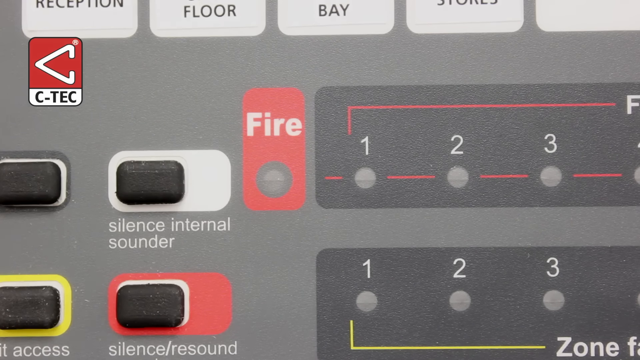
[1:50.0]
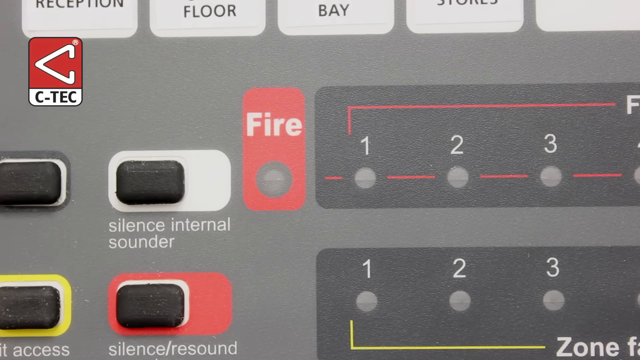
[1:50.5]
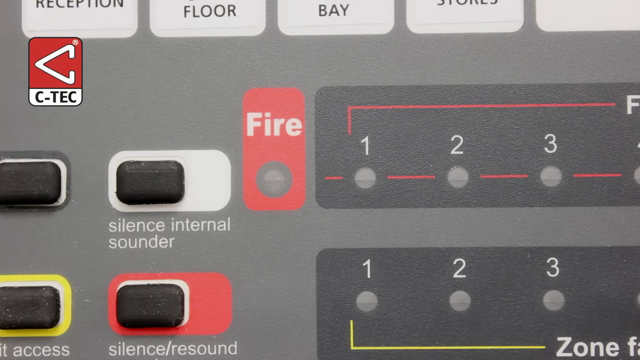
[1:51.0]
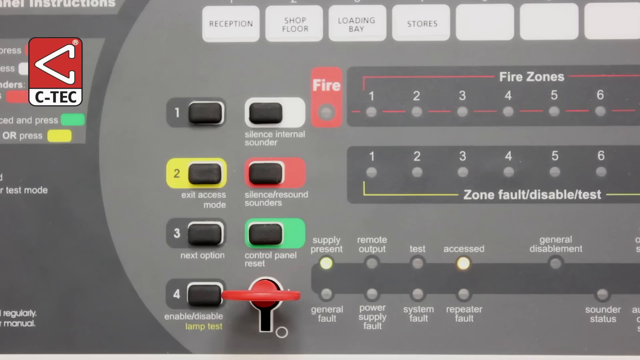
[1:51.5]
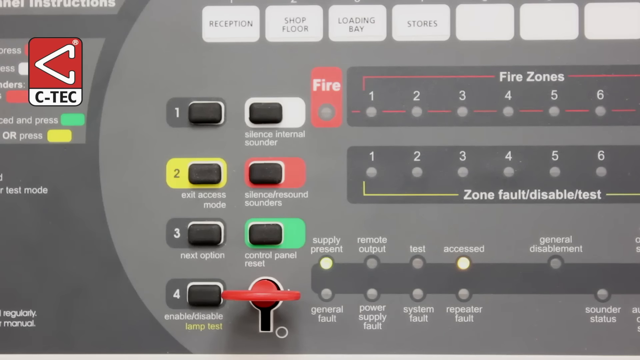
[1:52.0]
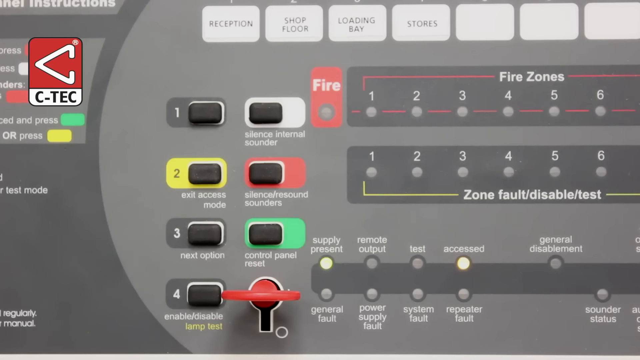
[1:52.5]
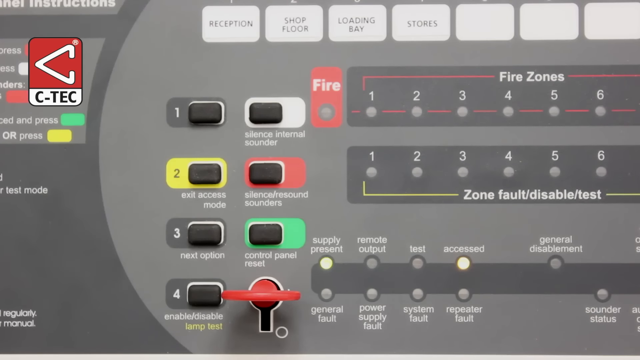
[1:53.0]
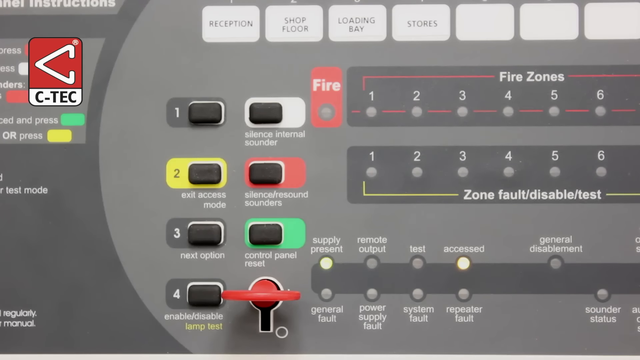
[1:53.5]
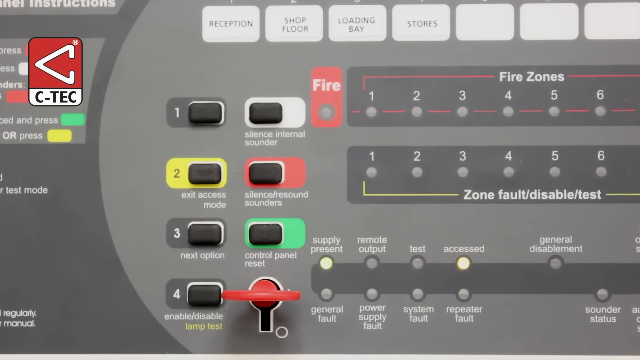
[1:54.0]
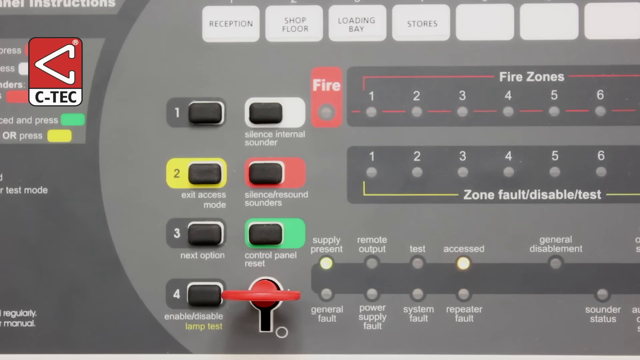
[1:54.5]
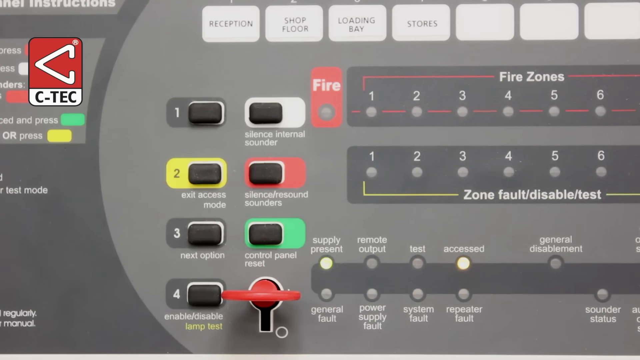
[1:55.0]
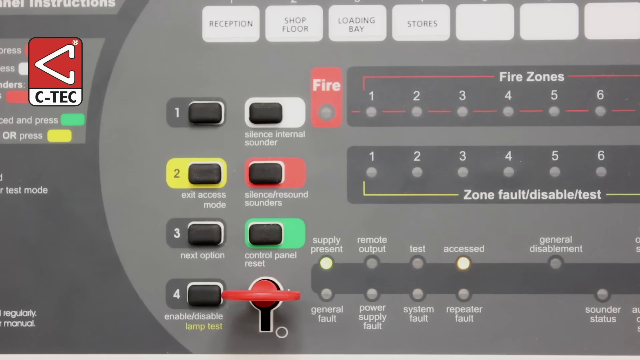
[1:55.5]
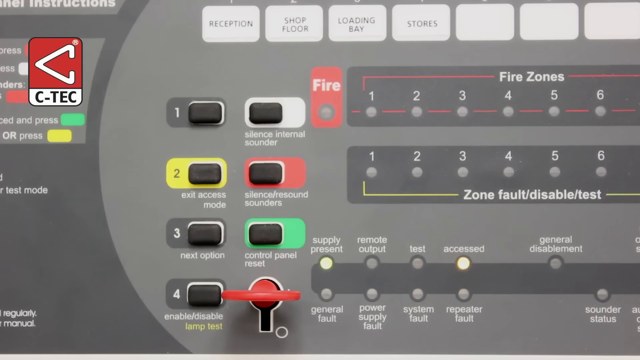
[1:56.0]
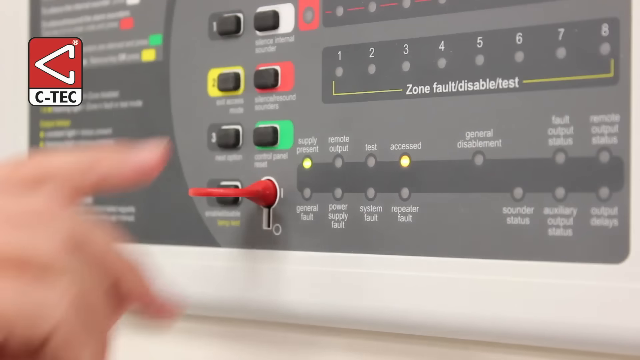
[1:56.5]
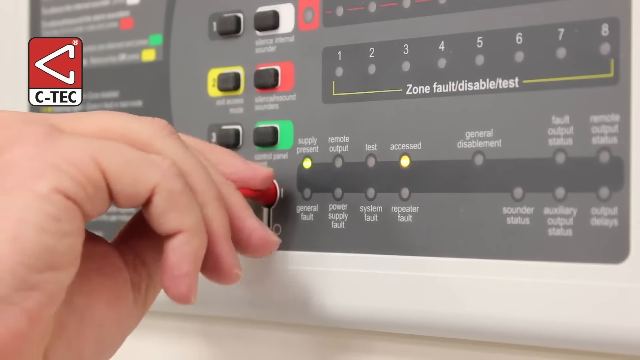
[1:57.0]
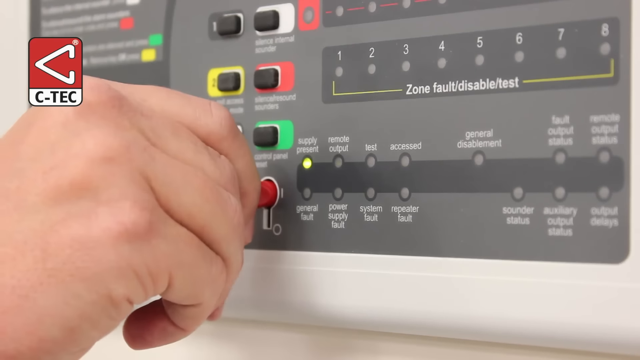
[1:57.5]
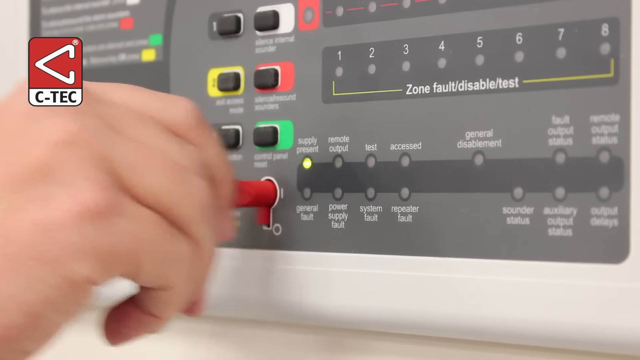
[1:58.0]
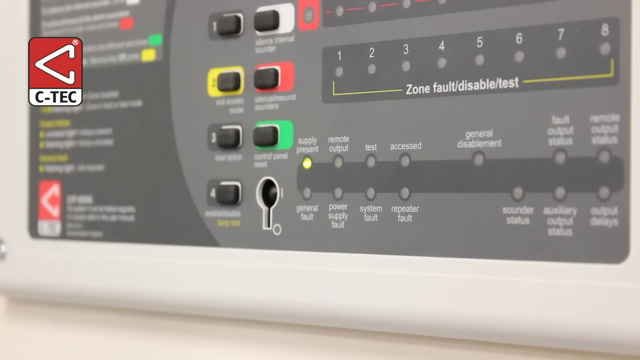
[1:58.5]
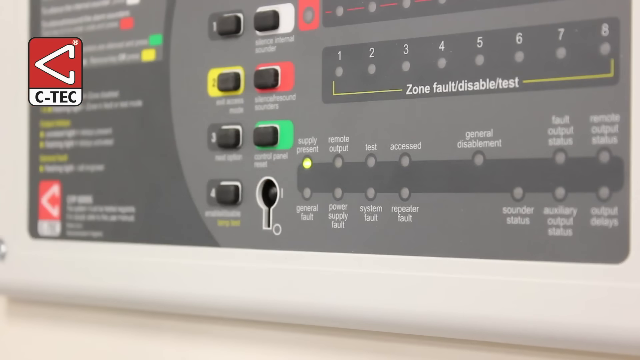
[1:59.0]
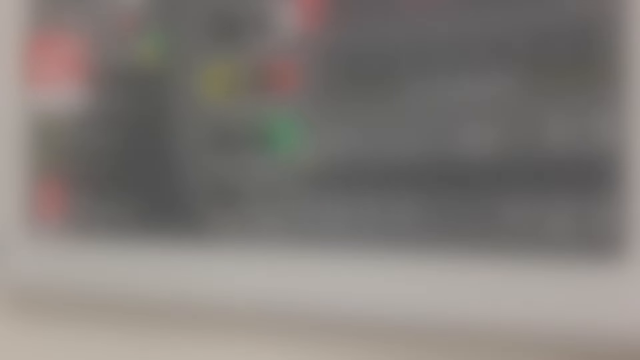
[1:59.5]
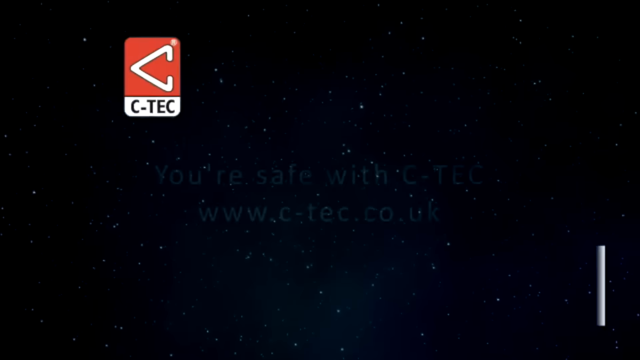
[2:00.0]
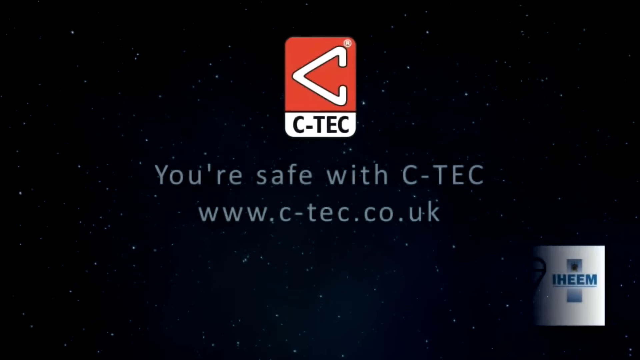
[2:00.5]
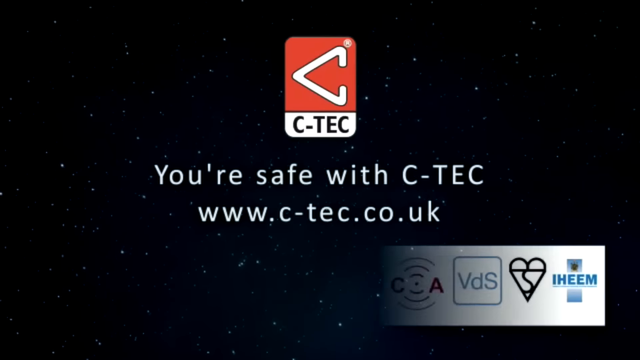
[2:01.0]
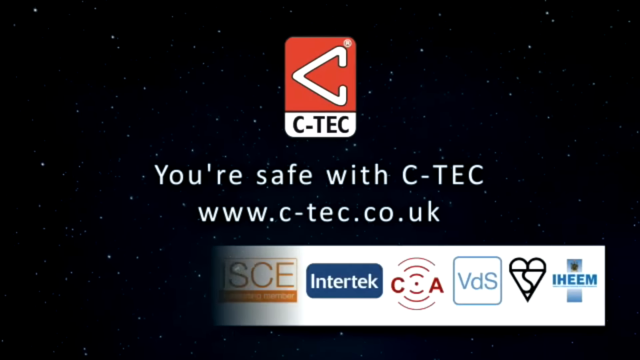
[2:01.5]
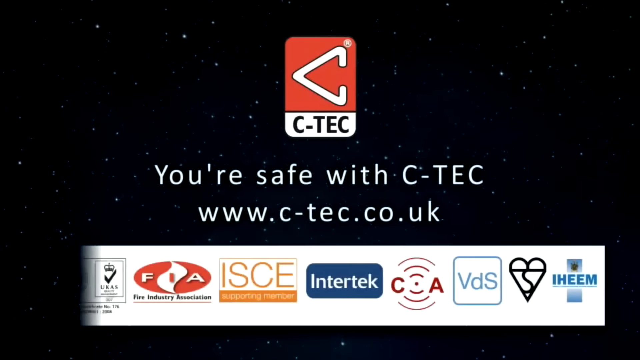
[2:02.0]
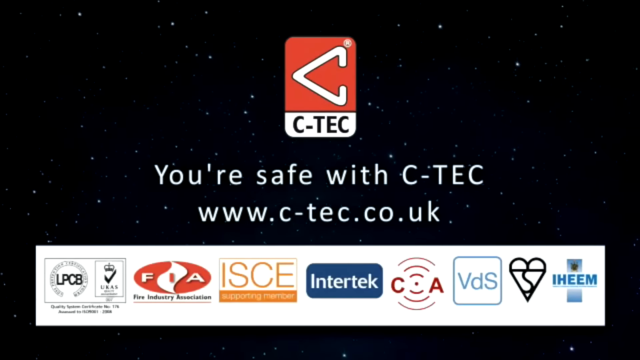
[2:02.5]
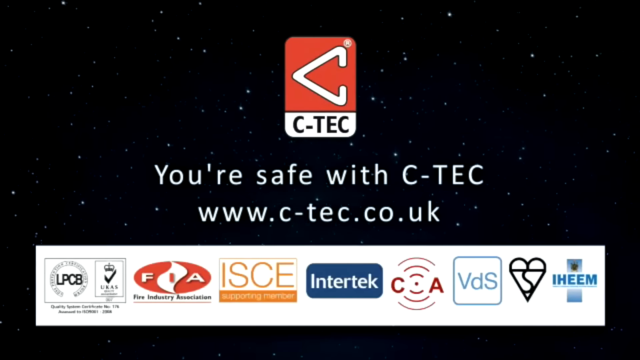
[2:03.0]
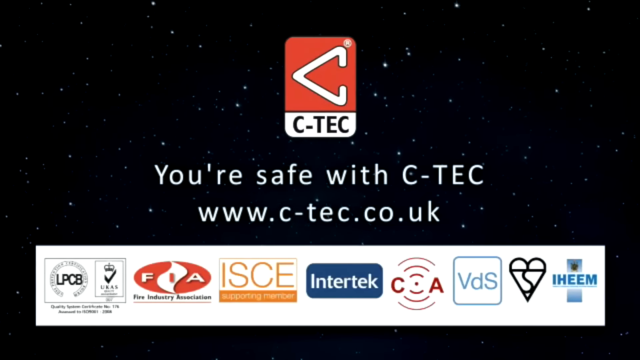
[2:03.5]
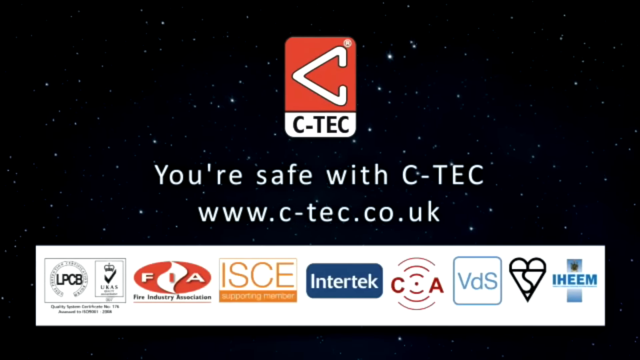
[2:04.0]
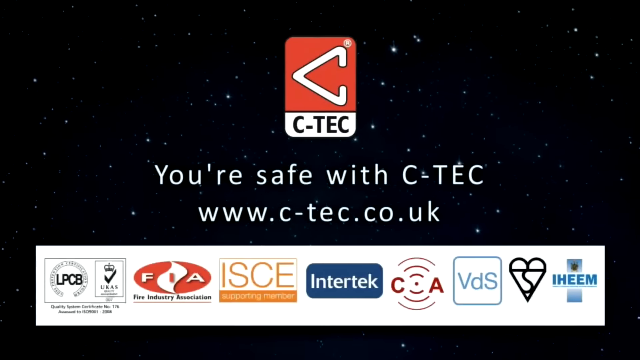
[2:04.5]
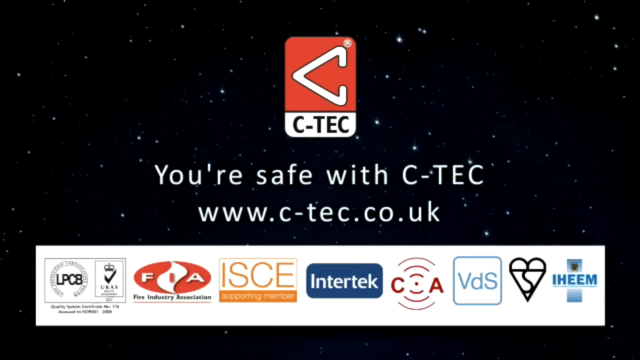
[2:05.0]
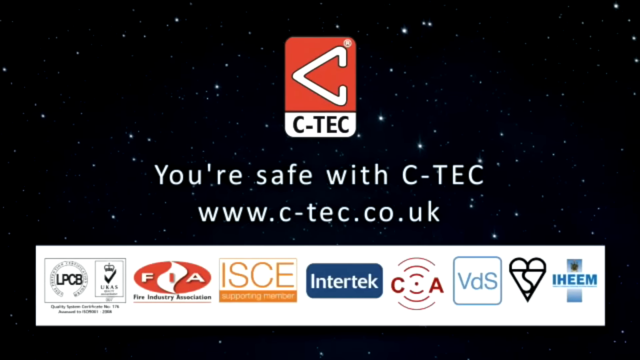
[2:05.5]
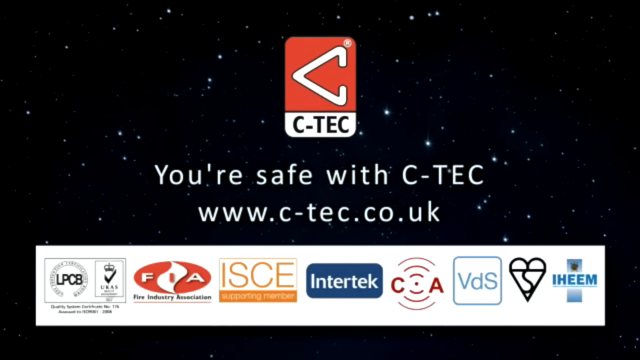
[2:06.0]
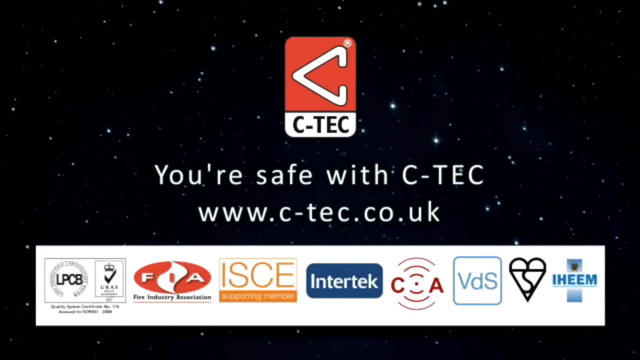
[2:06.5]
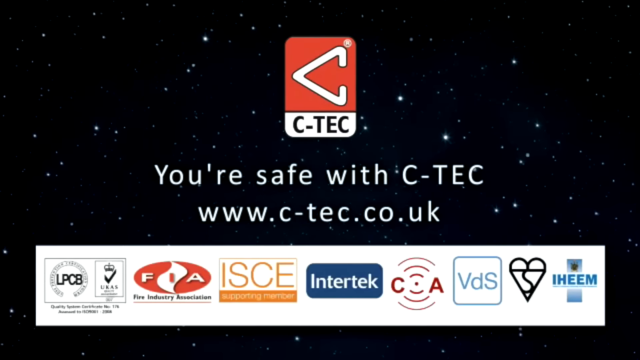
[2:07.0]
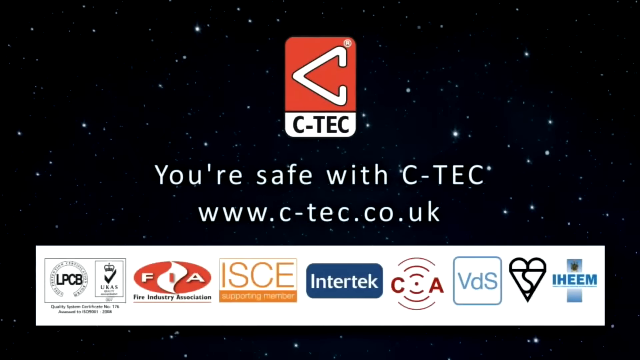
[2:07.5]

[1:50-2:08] The video stays zoomed in on the fire zone section before zooming back out to the full control panel. At the top are different areas such as reception, shop floor, loading bay and stores, with the fire zones underneath; the locations indicate which zone is which, so the light that was flashing before was in zone one, the reception area. The supply present light stays green, the access light stays yellow, and the red key is still in the keyhole at the bottom. The man reaches his right hand up to the key, twists it clockwise back to vertical, and pulls it out of the keyhole, which makes the yellow light go out. At the end, the CTEK logo appears on the screen with the sideways V and "CTEK" underneath, along with "you're safe with CTEK", the website underneath, and a group of partnership sponsorships below such as VDS and InterTEK.